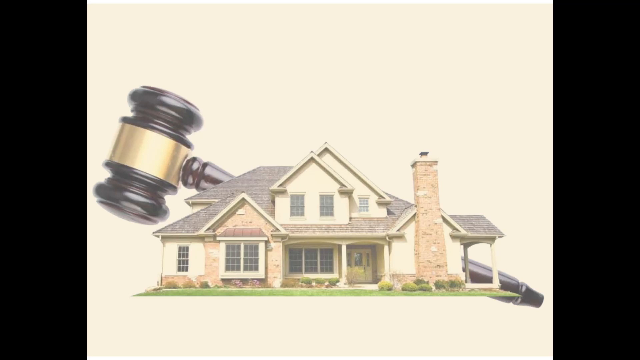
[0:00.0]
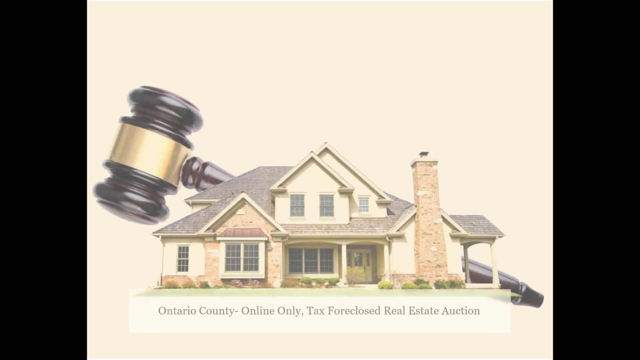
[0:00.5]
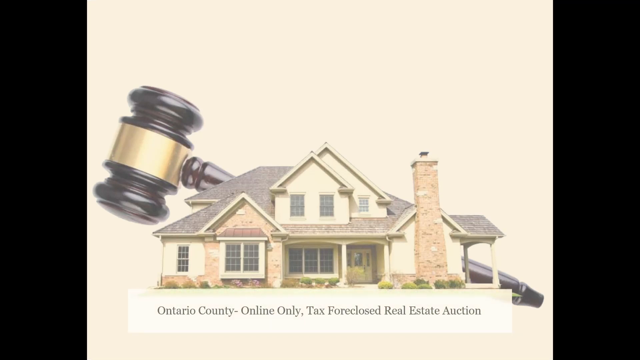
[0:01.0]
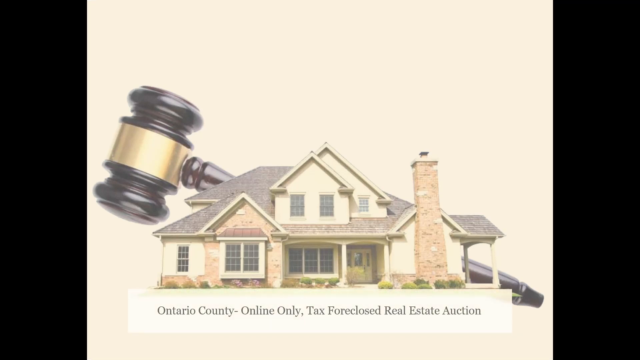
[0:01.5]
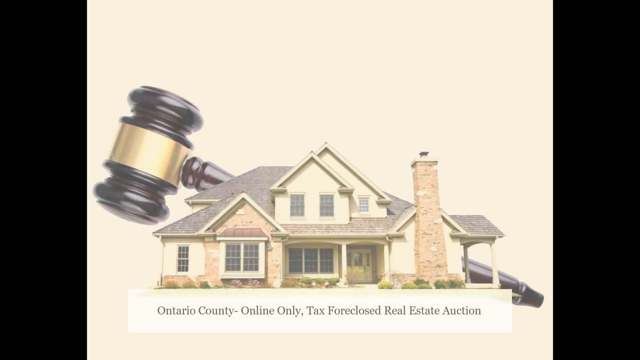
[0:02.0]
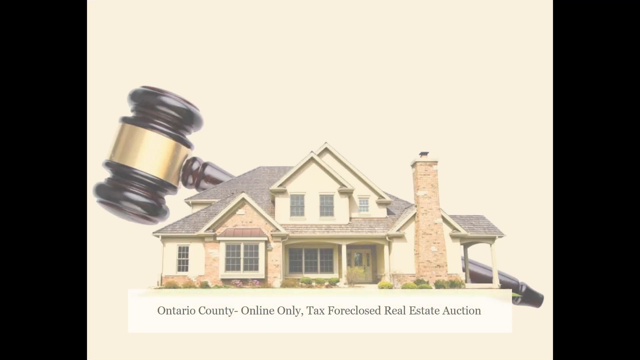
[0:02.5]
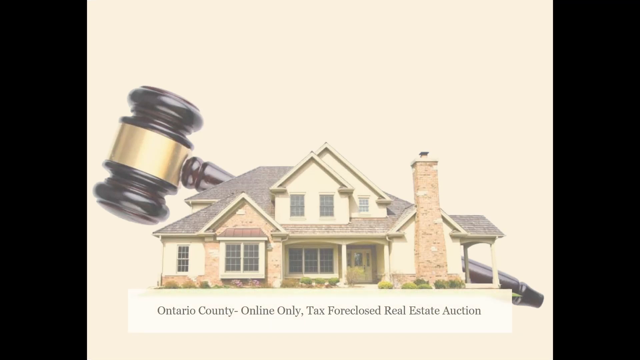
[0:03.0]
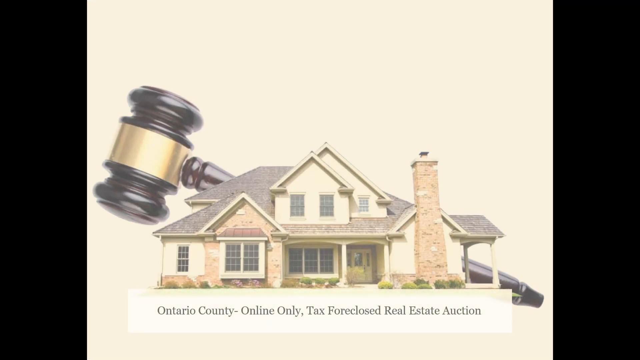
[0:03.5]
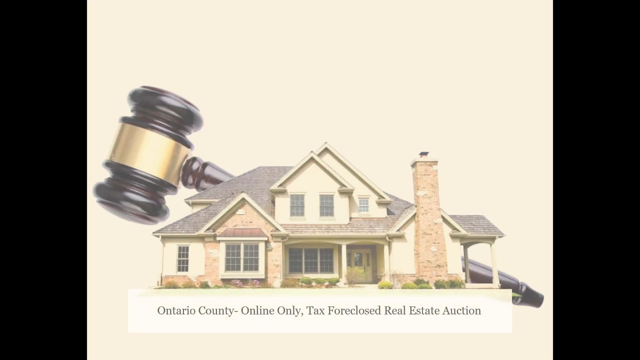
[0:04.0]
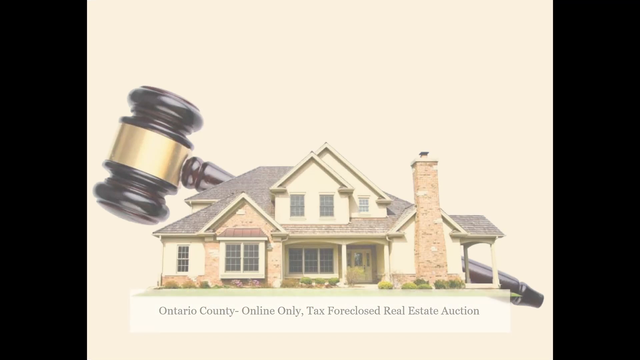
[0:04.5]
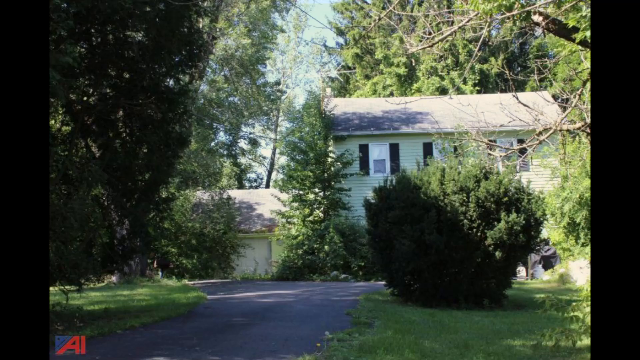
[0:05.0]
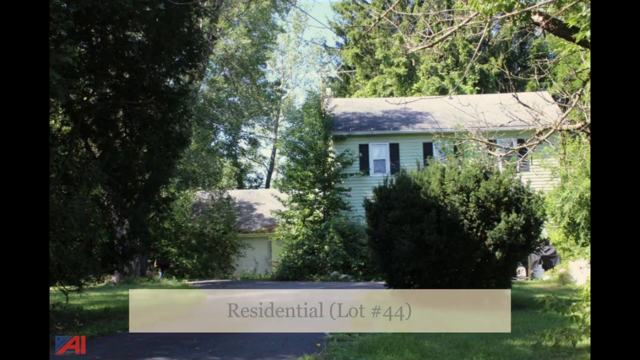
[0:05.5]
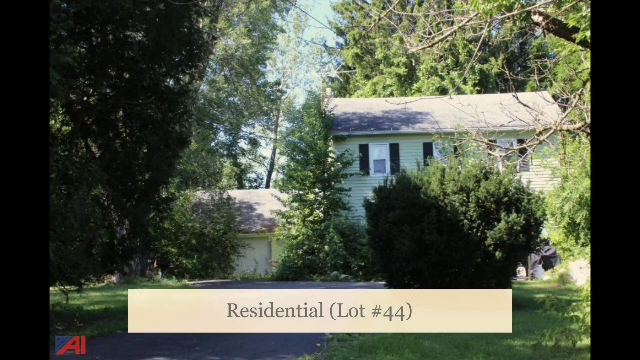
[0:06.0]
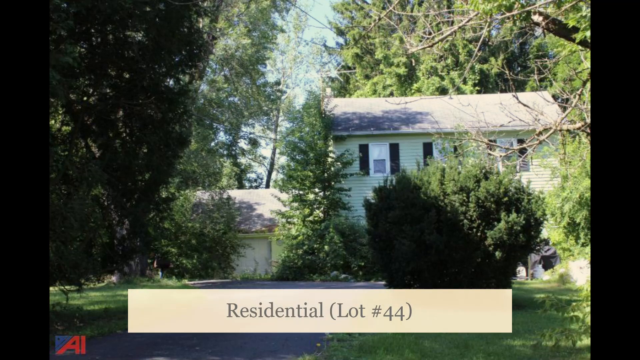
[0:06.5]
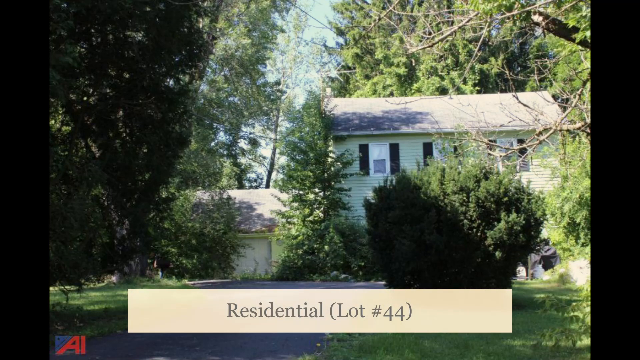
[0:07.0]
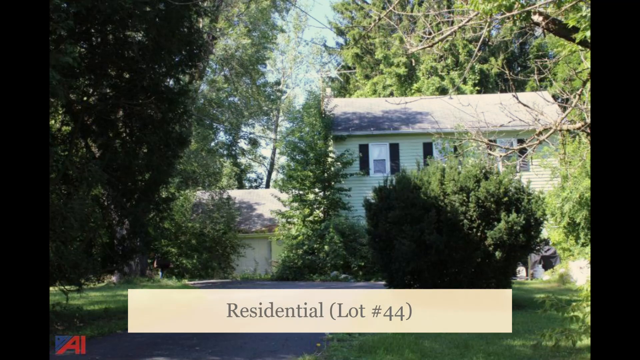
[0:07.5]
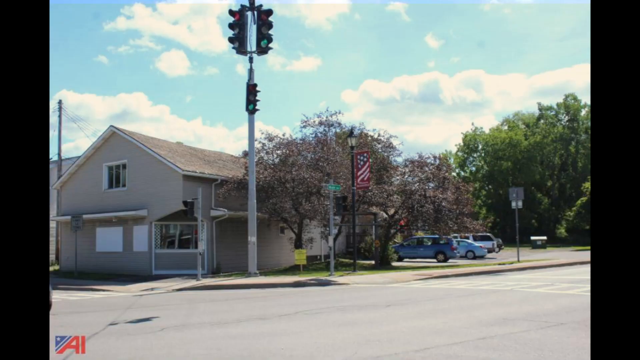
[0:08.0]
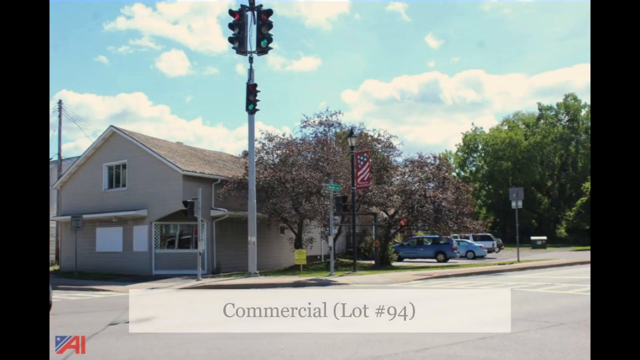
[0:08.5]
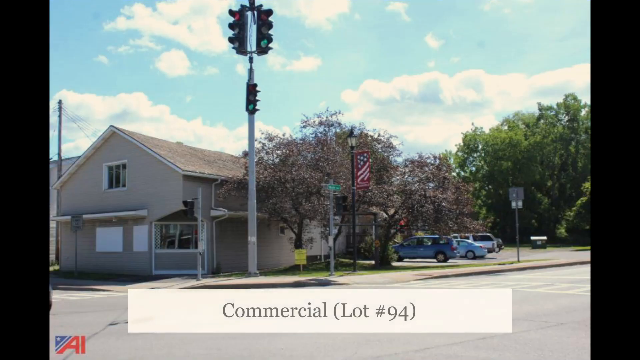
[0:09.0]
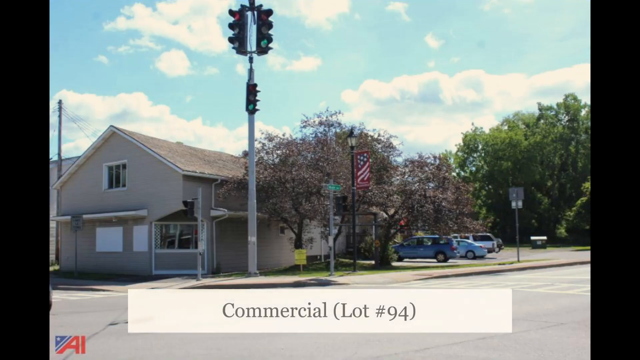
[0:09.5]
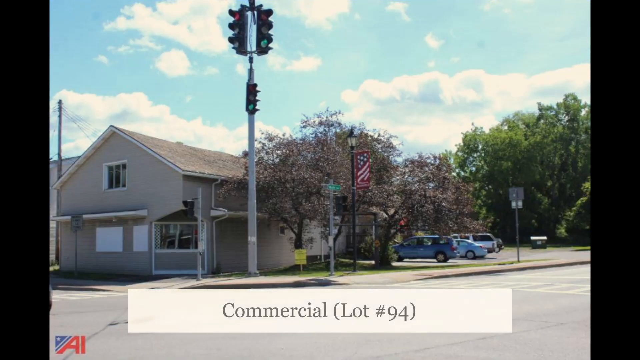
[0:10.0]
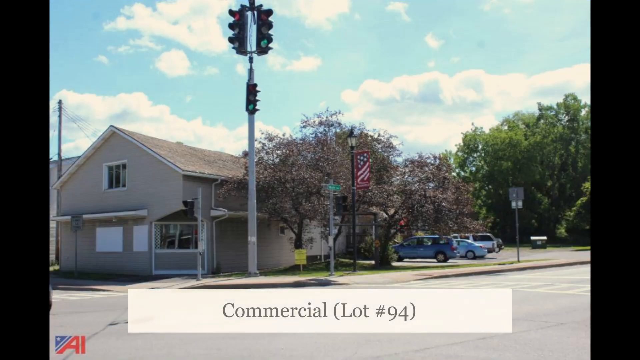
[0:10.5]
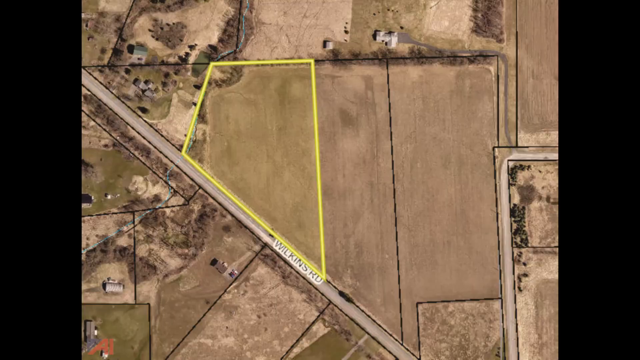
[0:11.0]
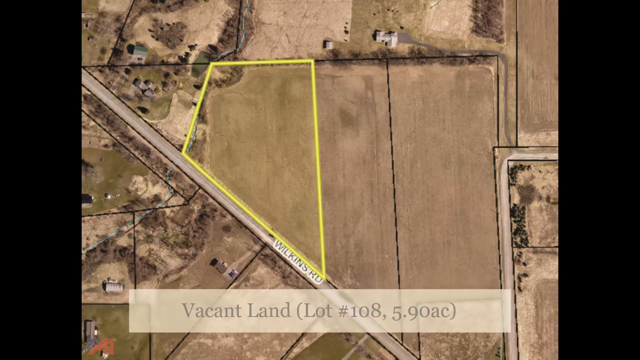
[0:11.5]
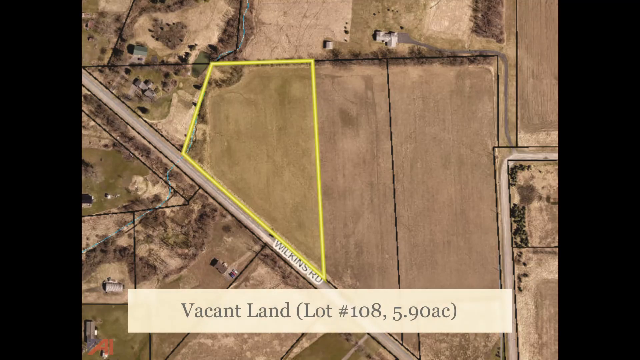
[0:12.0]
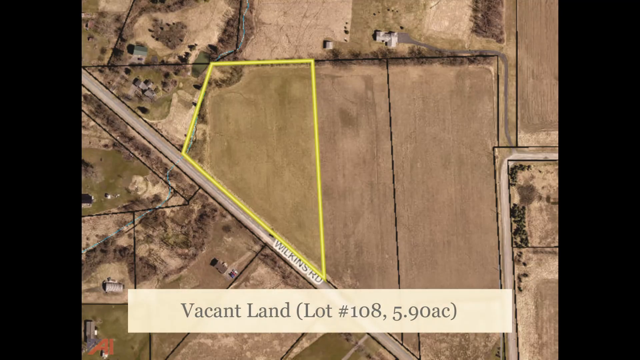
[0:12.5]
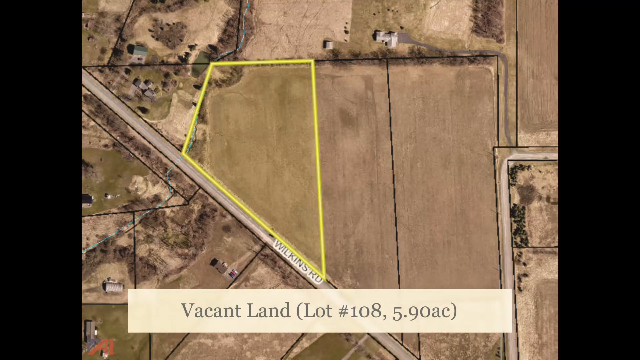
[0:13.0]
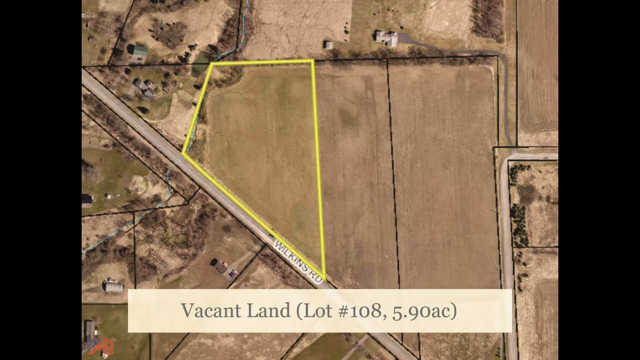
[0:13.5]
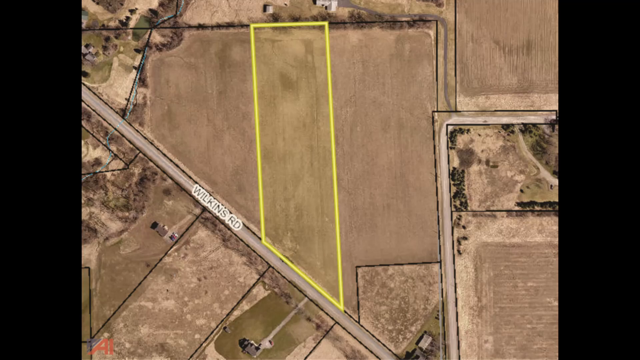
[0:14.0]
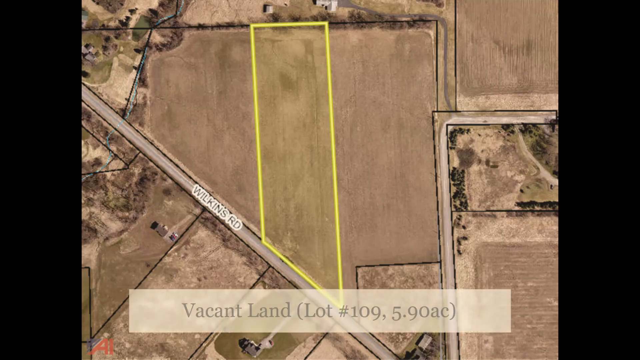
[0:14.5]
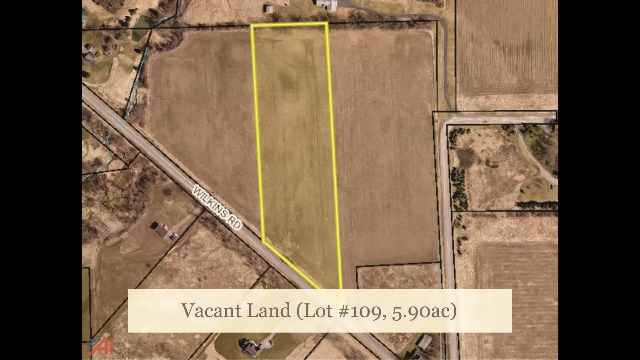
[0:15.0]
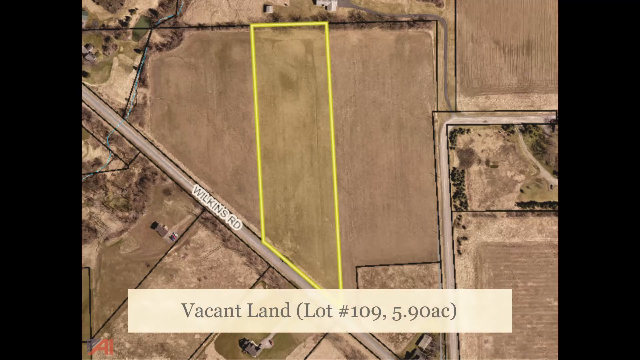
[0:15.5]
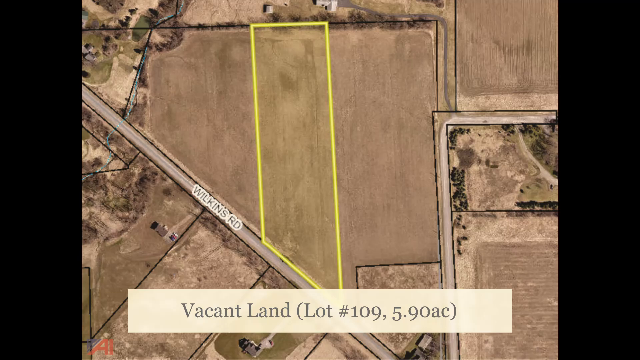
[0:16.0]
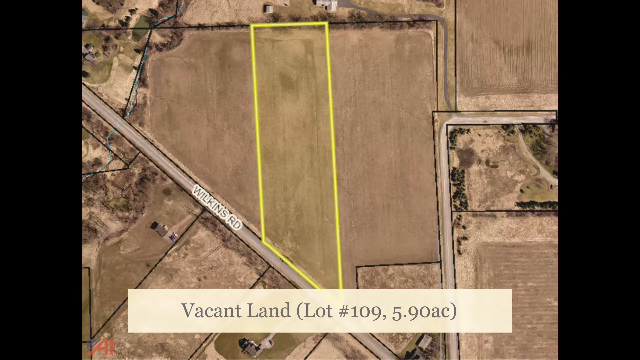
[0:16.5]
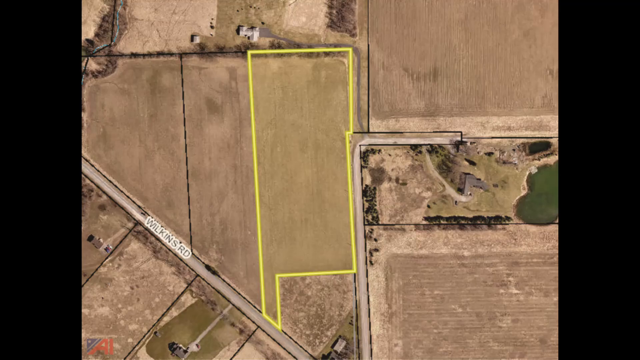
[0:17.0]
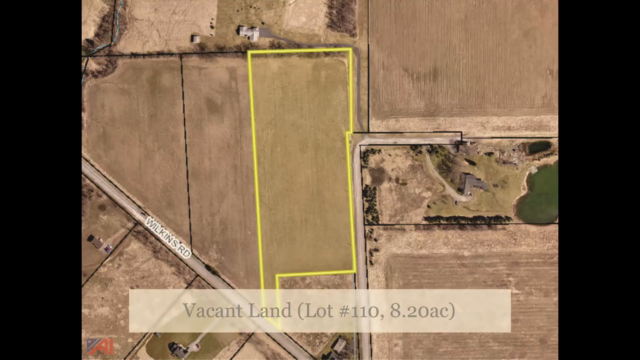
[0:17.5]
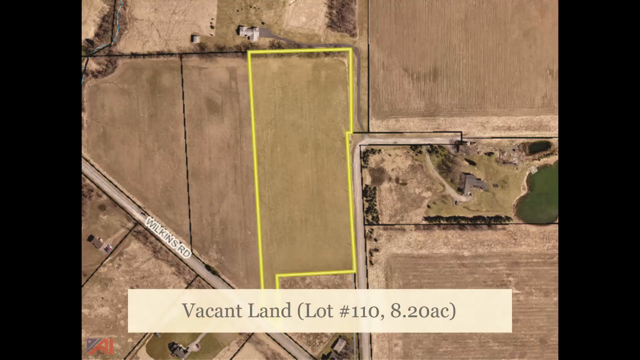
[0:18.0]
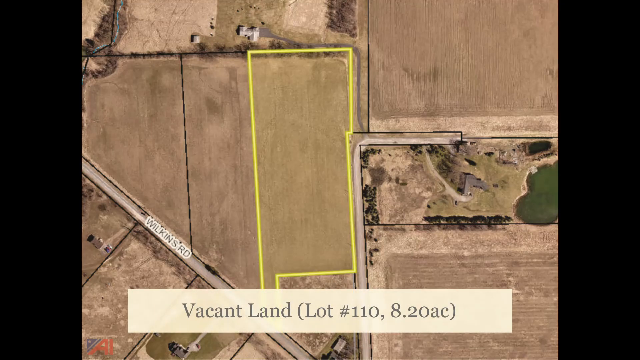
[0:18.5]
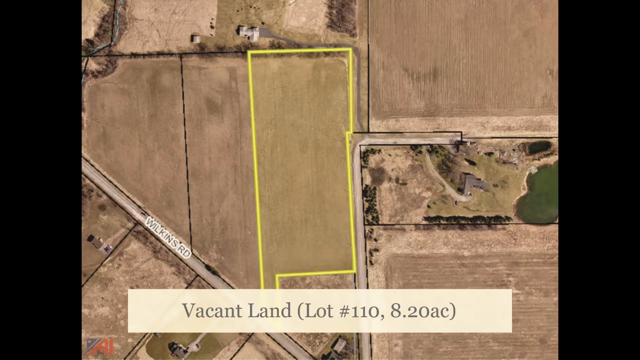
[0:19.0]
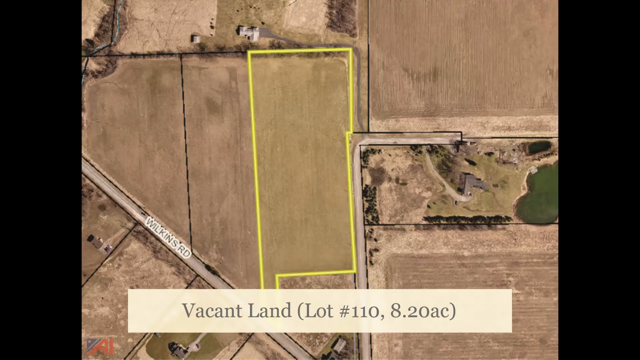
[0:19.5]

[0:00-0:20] An image shows a house with a gavel behind it and the words "Ontario County online only tax foreclosed real estate auction." The image changes to a two-story home set in the trees with a side garage, labeled "residential lot number 44." Next comes a corner home on a busy street with the caption "commercial lot number 94." The image then changes to an overhead satellite view of an oblong square shape, almost like a diamond or a kite, where a yellow line highlights the perimeter of some vacant land labeled "lot number 108, 5.9 acres." The parcel next to that land is then highlighted, titled "vacant land lot number 109," also 5.9 acres. Another vacant land lot is highlighted, number 110, slightly larger at 8.2 acres.